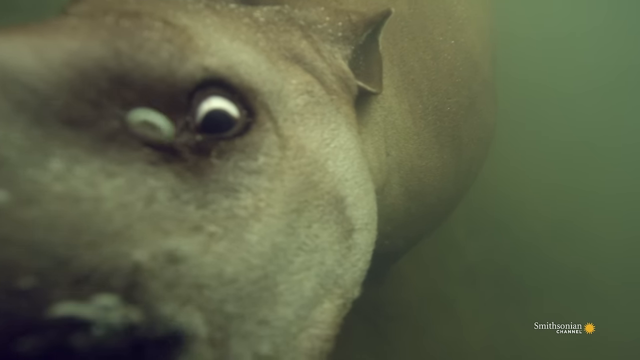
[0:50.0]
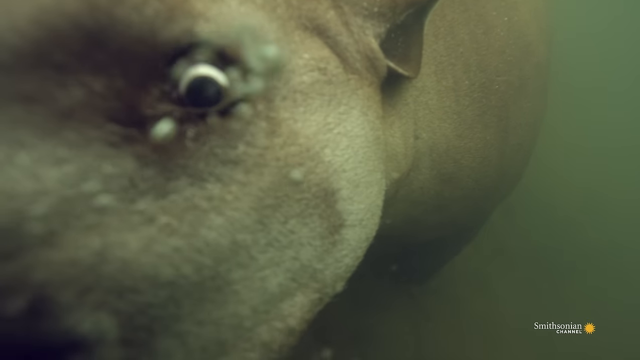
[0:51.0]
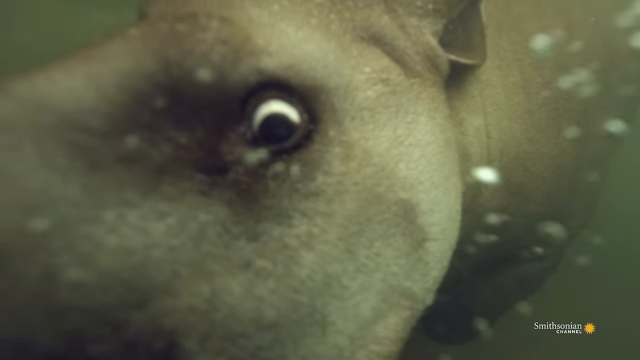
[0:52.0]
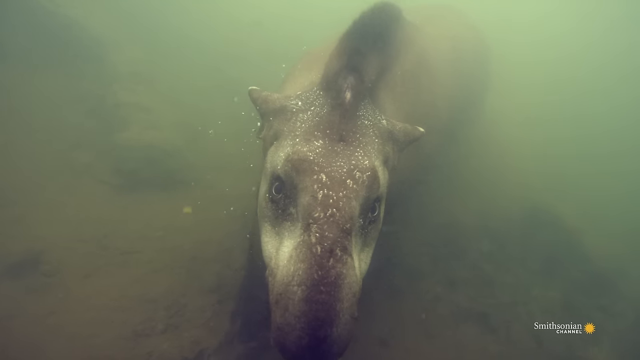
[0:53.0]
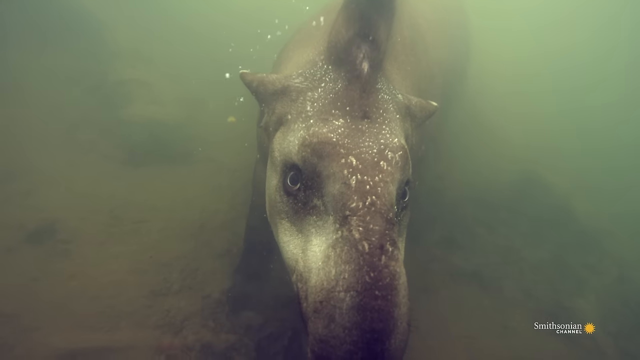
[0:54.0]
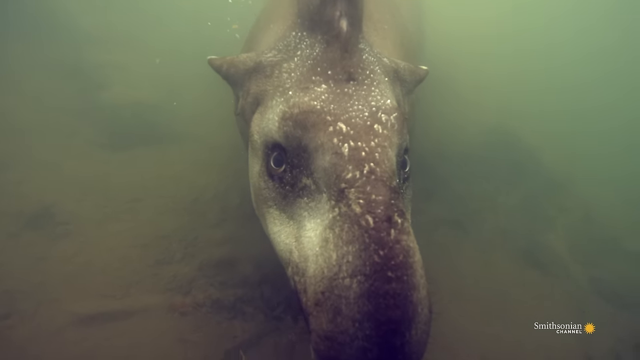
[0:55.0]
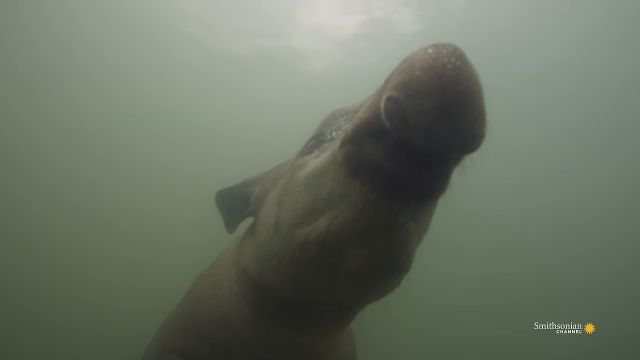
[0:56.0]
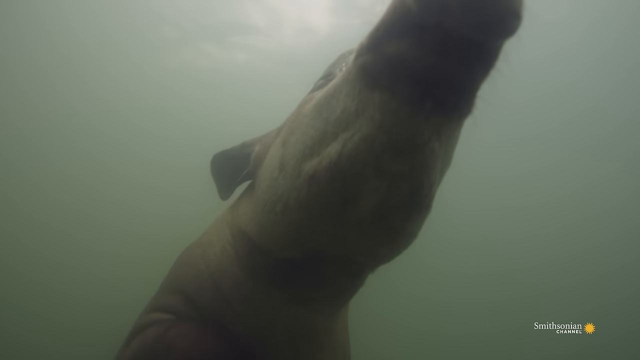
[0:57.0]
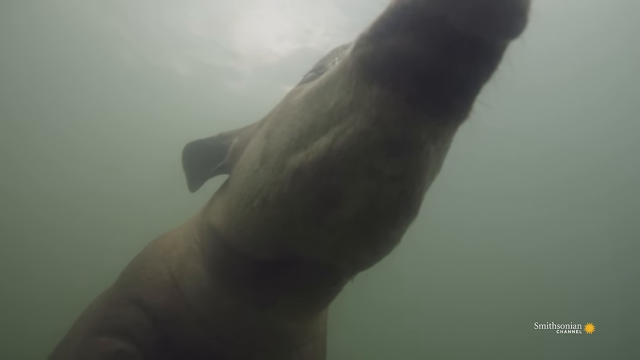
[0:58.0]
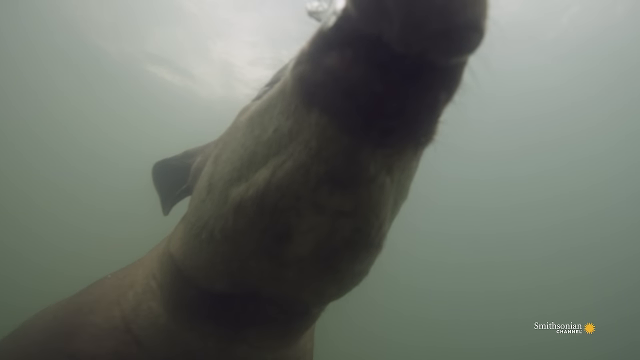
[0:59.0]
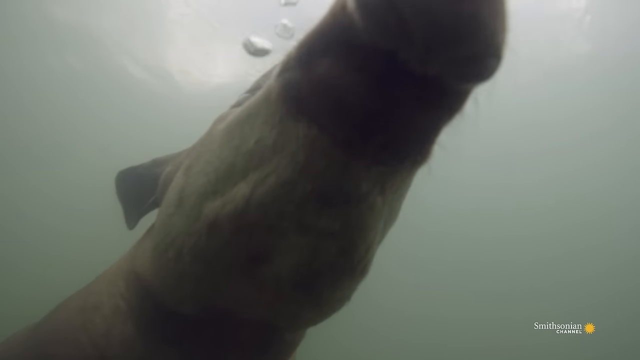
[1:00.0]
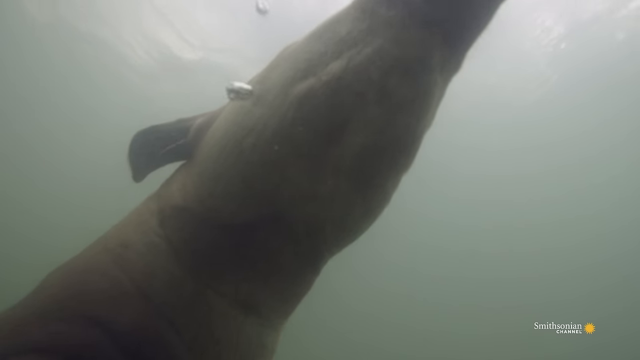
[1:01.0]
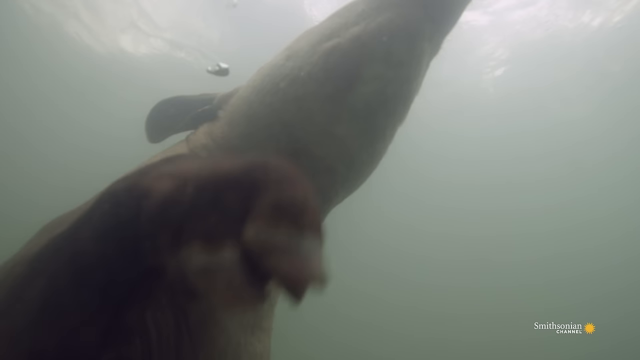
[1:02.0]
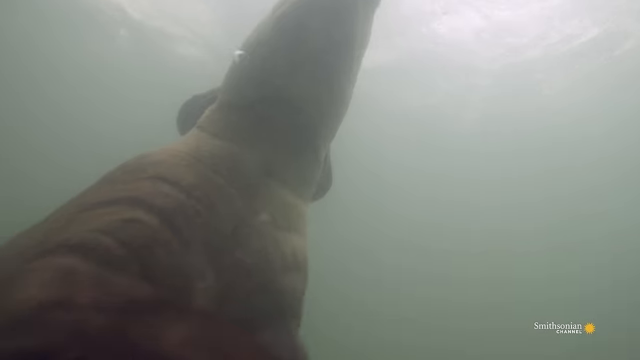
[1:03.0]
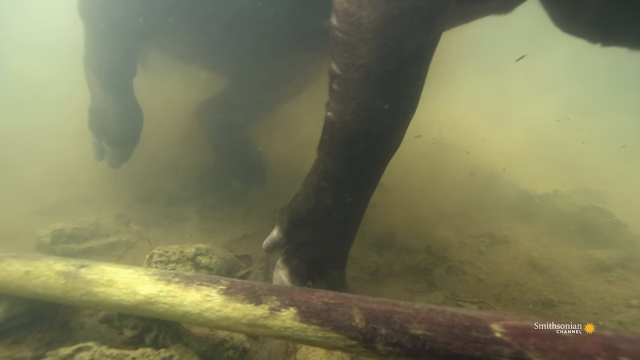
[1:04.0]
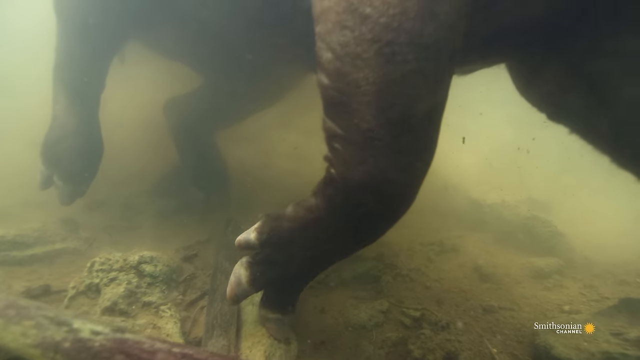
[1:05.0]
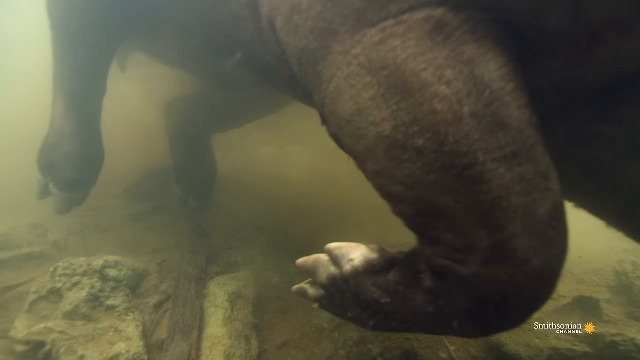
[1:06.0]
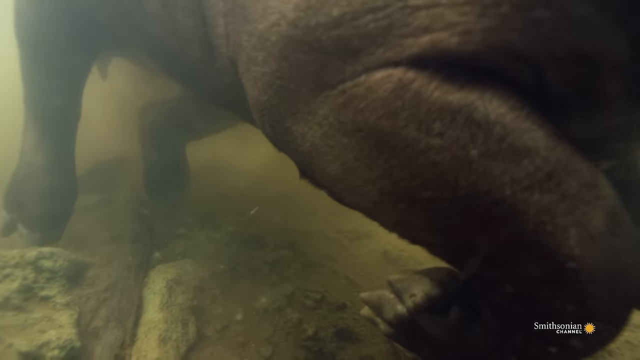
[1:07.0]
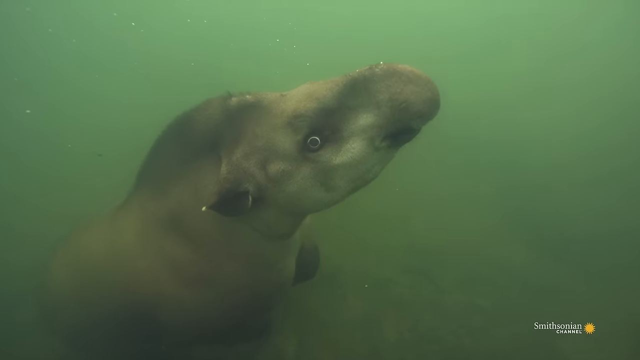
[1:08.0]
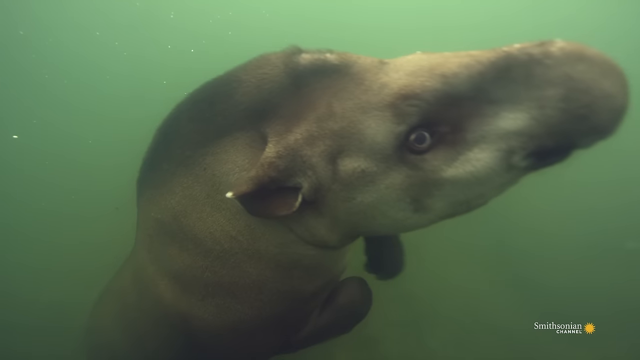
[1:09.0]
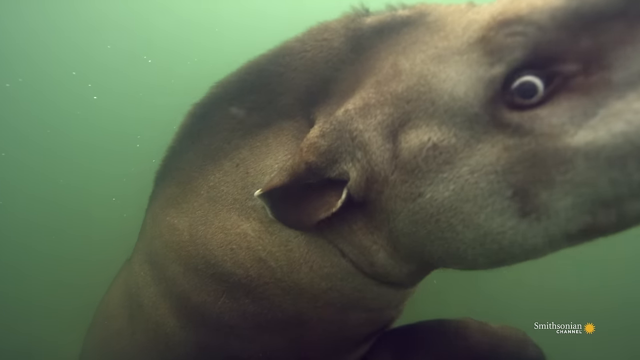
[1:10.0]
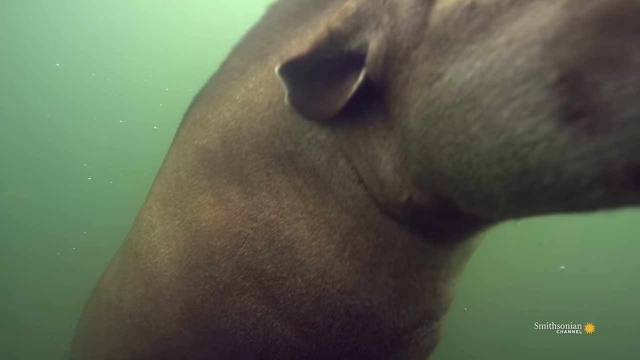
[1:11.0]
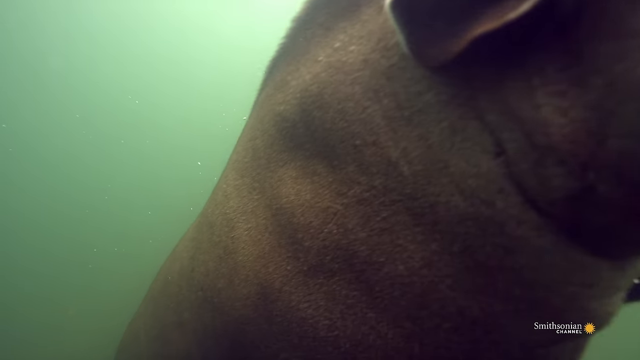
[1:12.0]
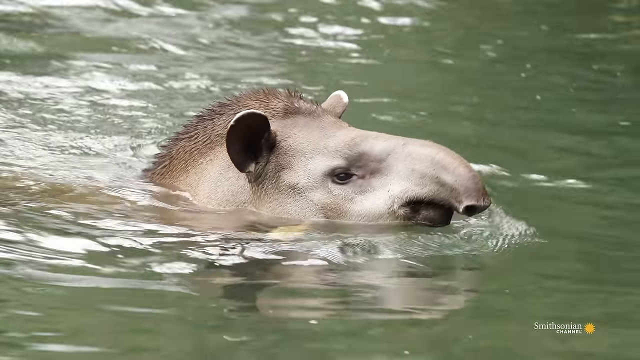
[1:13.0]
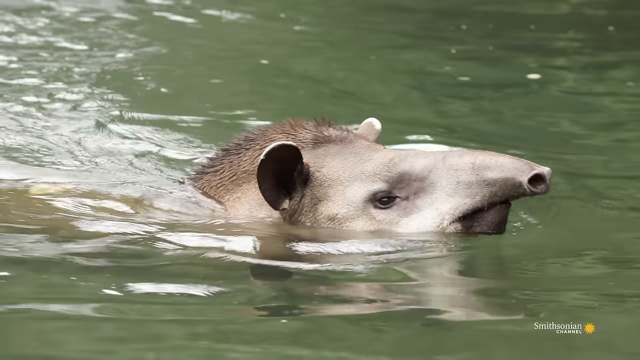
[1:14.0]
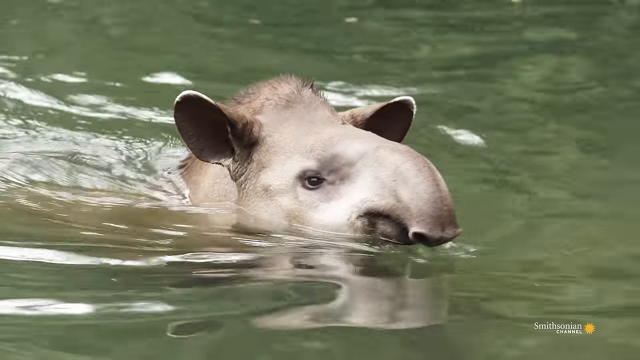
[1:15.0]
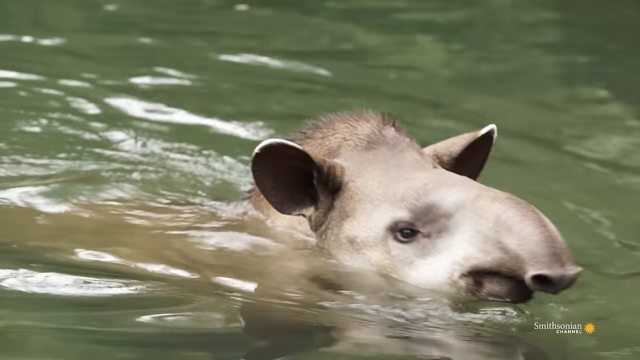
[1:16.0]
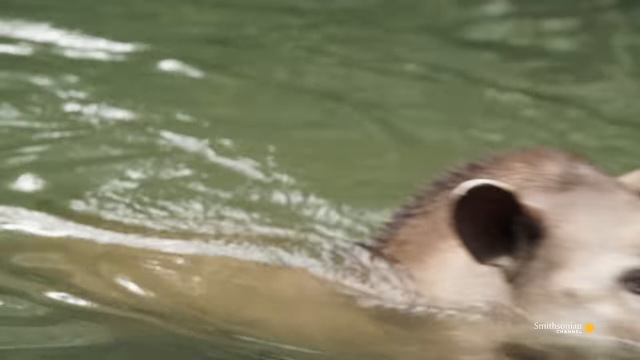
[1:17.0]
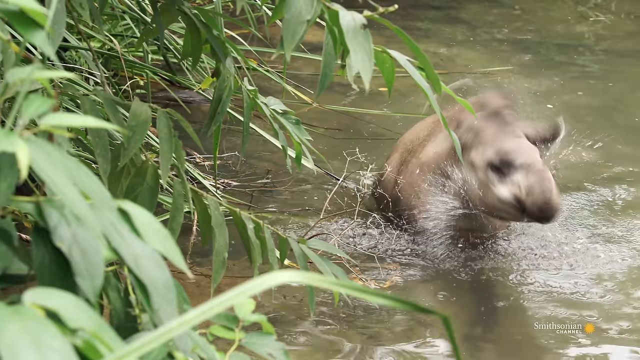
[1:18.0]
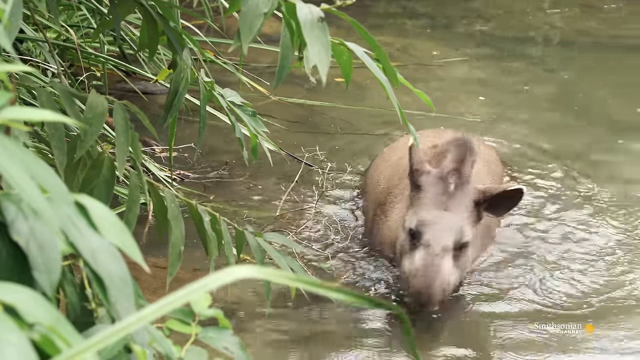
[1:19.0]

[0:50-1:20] The animal's eye is visible underwater, kind of looking up. At one angle its face is shaped very much like a horse's. Its feet are clearly visible: they are not hooves but have separated toes or something similar, and there appear to be at least five holes on the feet, maybe six. It stays under the water, then brings its head above the water and pulls the snout out again; the snout is about a third the length of an elephant's trunk and has really large nostrils, visible when it comes above the water. Its eyes look like human eyes. Its body looks somewhat muscular when it moves. It gets out of the water, bending its legs sort of like a dog, and shakes itself off. As it gets out, the stripe on the back of its head almost looks like another animal on its head, though it seems to be a mane.